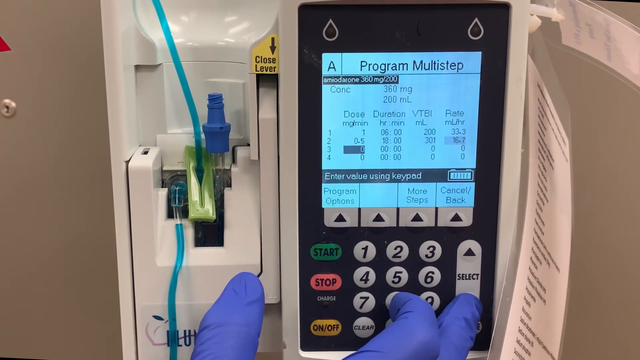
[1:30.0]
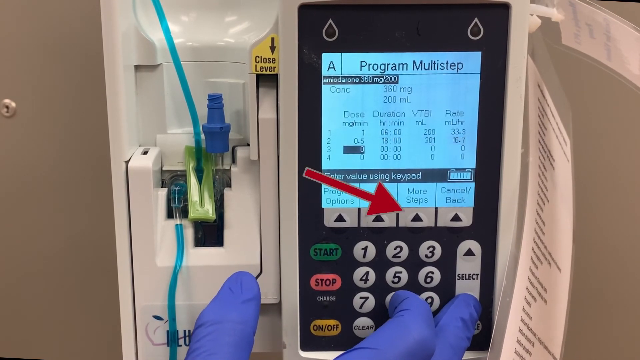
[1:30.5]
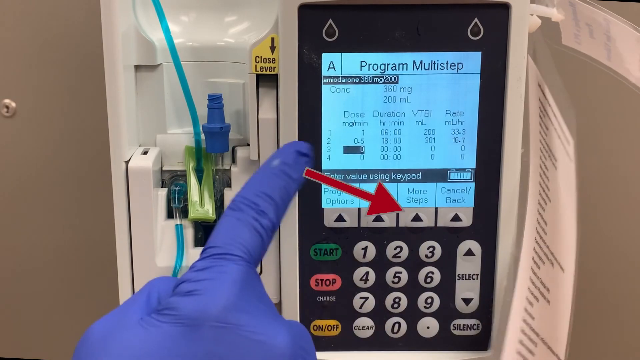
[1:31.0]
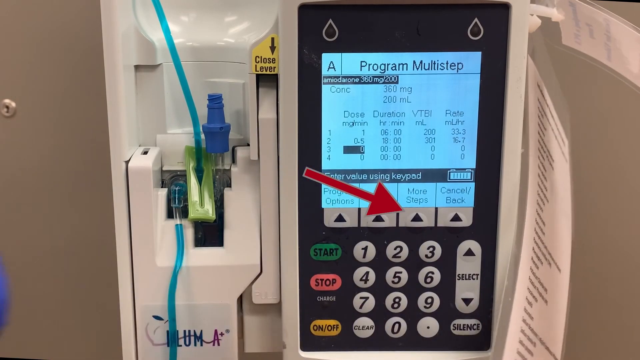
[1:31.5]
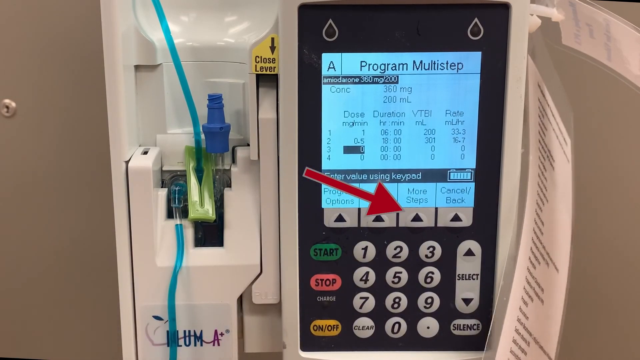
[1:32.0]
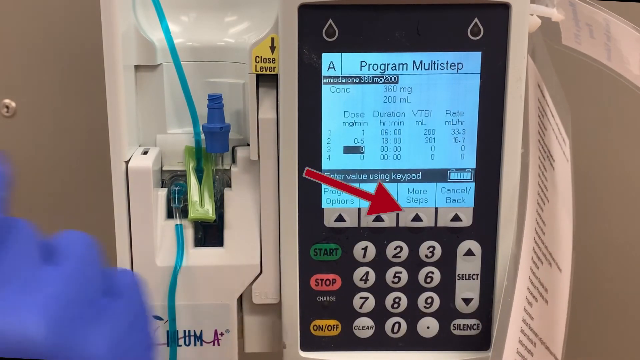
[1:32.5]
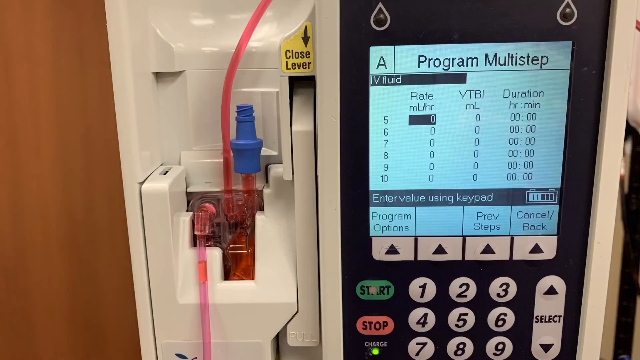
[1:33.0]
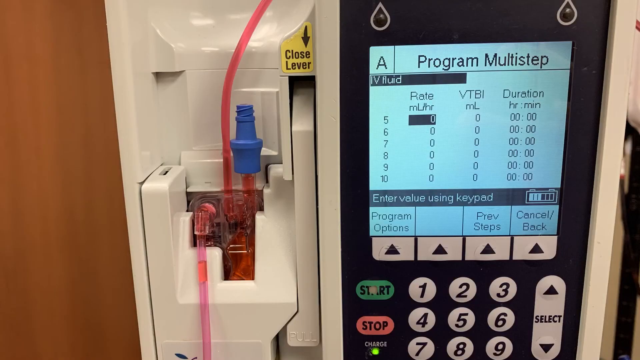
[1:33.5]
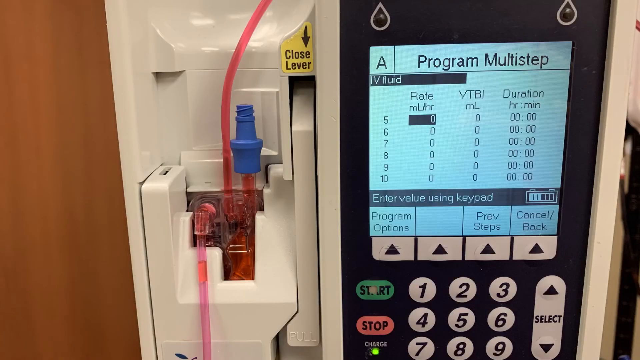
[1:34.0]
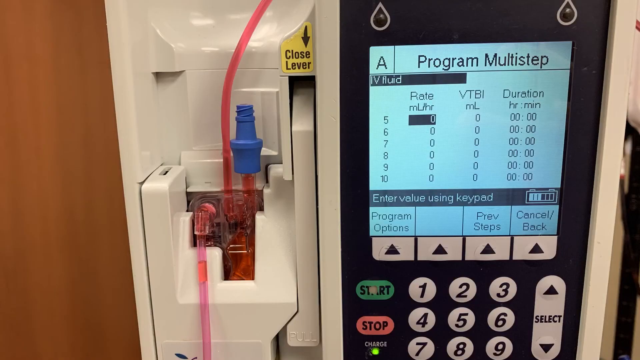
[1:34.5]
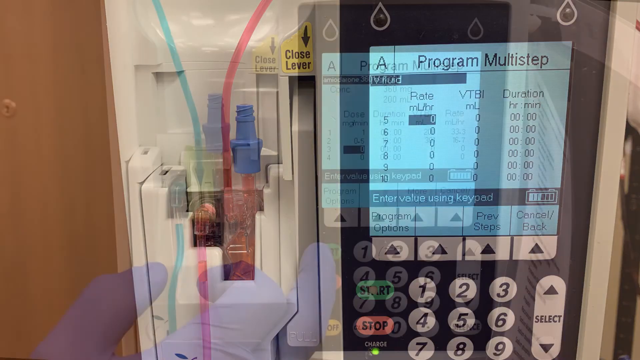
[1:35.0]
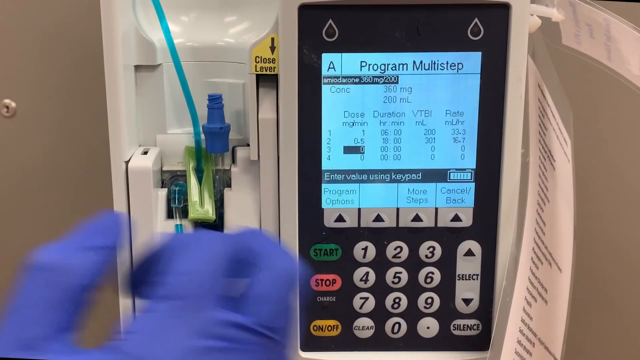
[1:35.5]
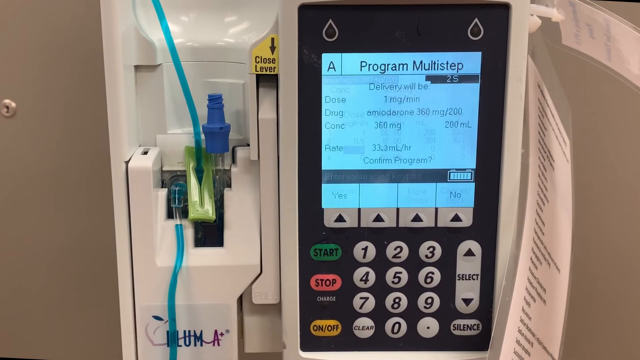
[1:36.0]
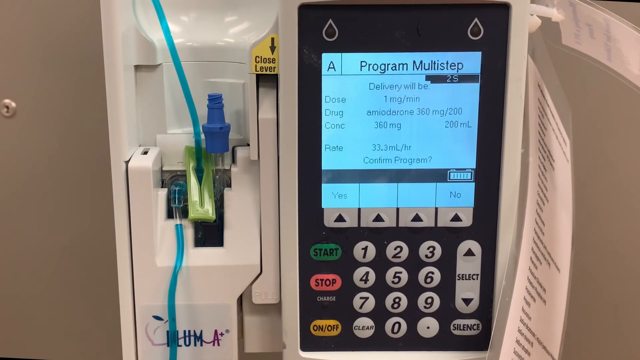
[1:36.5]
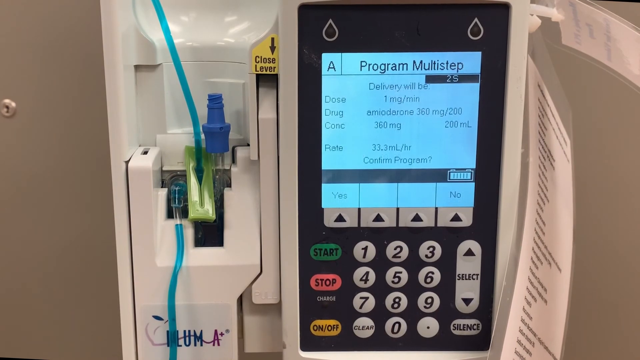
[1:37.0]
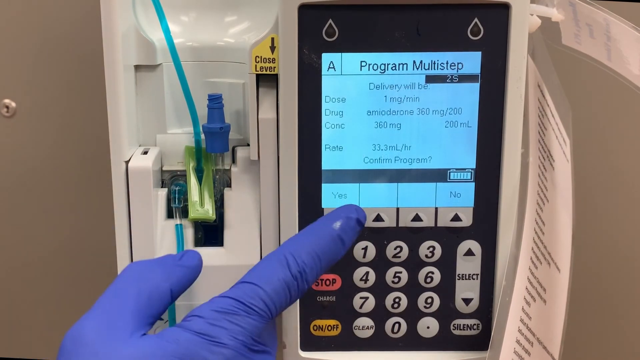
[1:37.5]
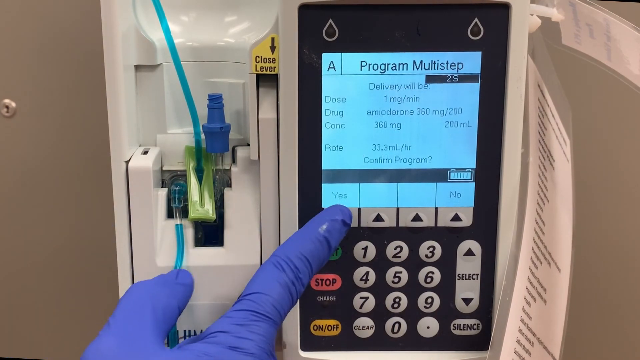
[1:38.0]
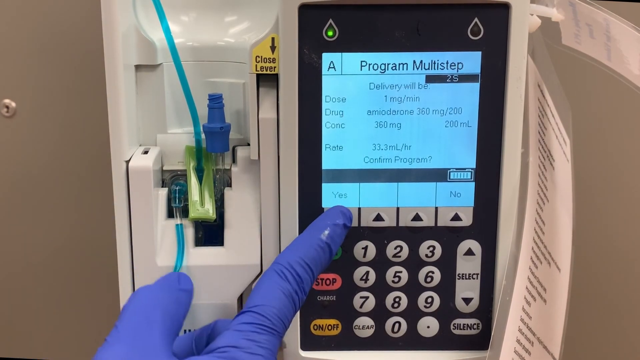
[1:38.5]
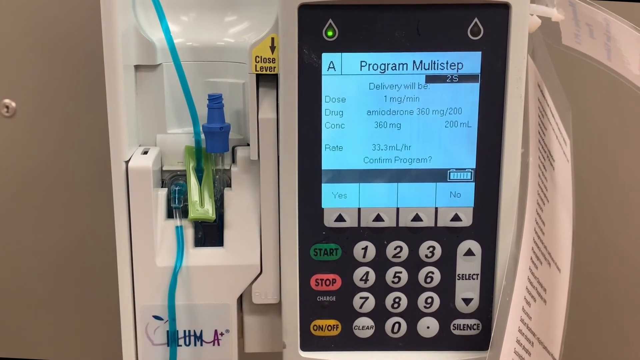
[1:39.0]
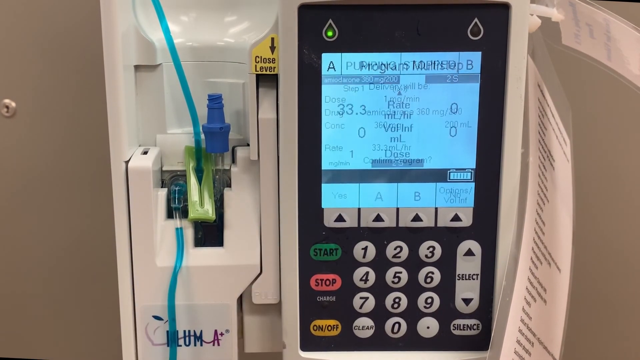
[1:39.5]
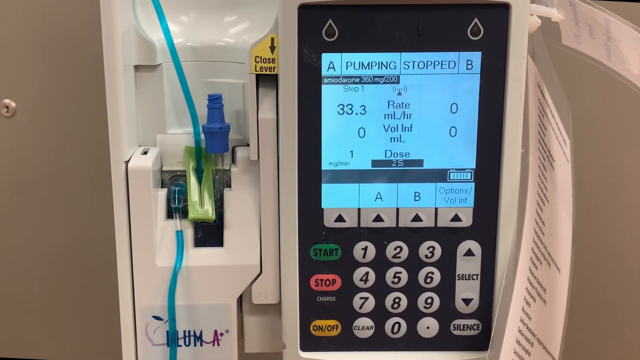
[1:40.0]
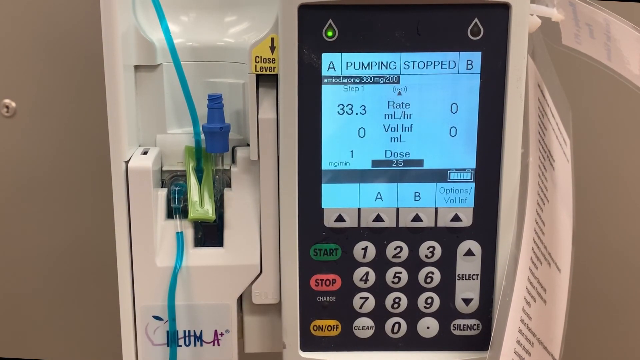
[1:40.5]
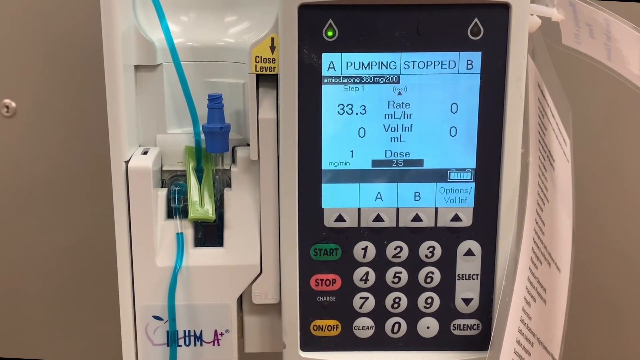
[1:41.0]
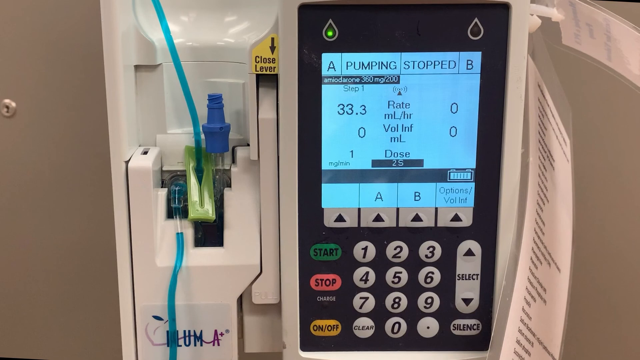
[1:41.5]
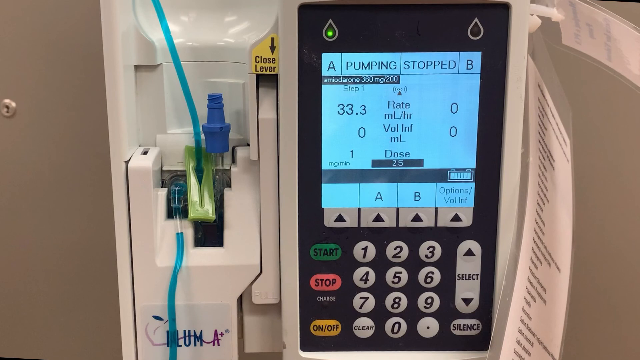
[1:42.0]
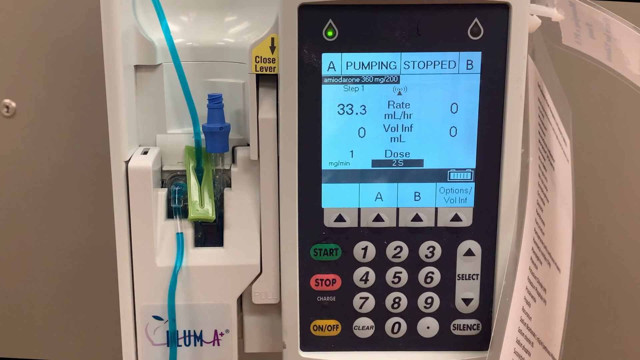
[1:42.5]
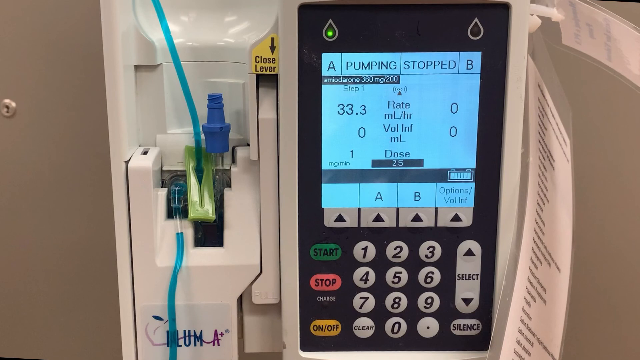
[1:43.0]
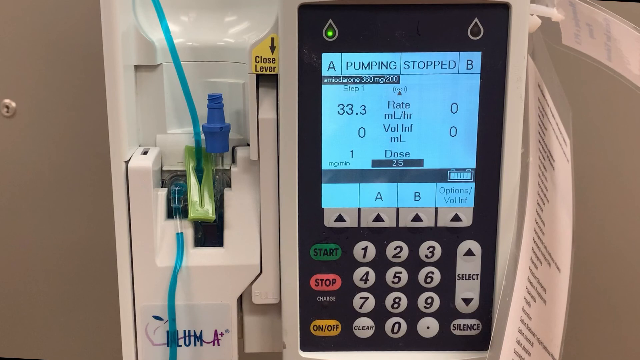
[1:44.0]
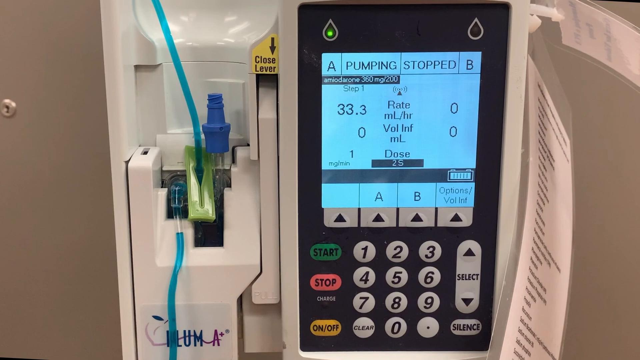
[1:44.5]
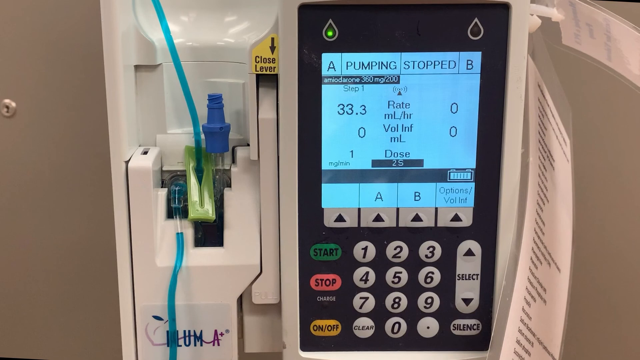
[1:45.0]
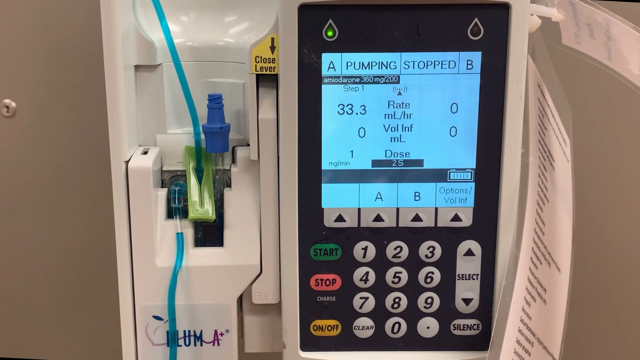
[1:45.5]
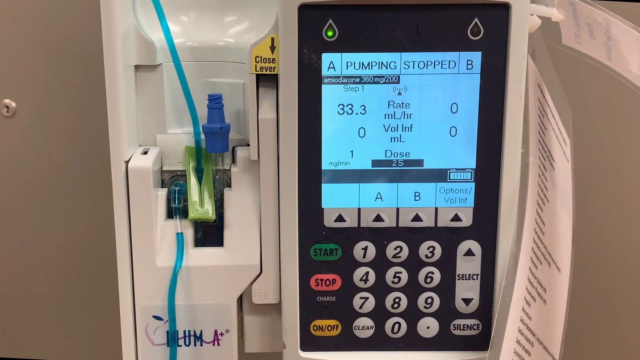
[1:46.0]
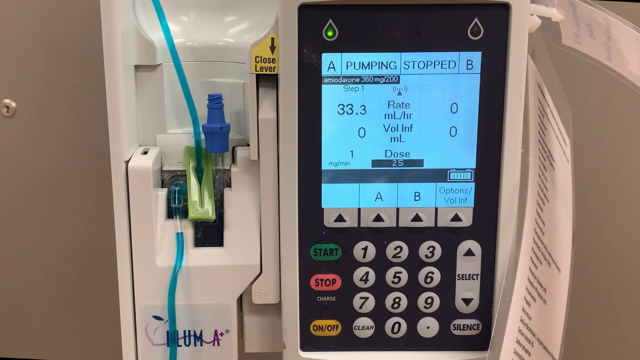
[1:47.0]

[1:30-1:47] The screen displays the first two steps of the multi-step program: step one at one milligram per minute for six hours, with a volume of 200 milliliters delivered at 33.3 milliliters per hour, and step two at 0.5 milligrams per minute for 18 hours, with a volume of 301 milliliters delivered at 16.7 per hour. A red arrow flies across the screen to point out the button for selecting more steps, apparently indicating that more steps, seemingly up to 10, can be programmed. The medical professional presses the continue button, which brings up a confirmation menu reading "delivery will be" followed by a breakdown of the dosage, showing one mg per minute for the first step as expected. The confirm button is pressed, and the pump is then shown stopped but ready to start treatment.